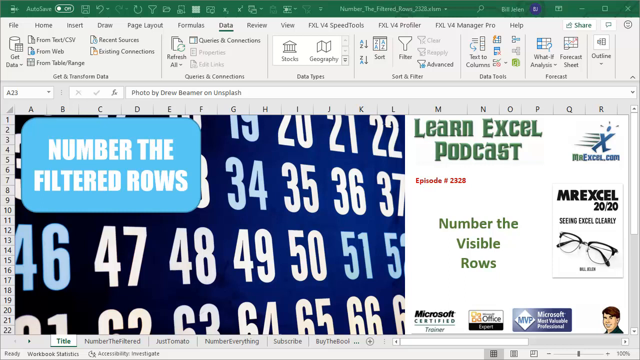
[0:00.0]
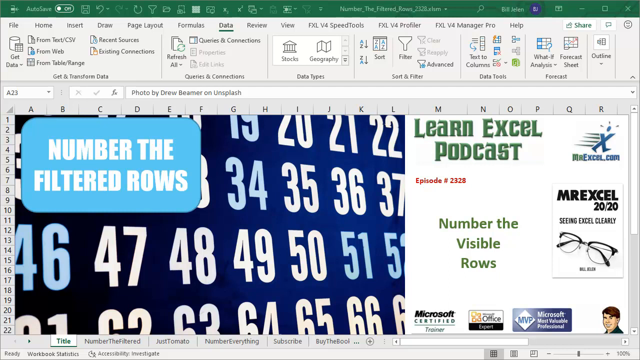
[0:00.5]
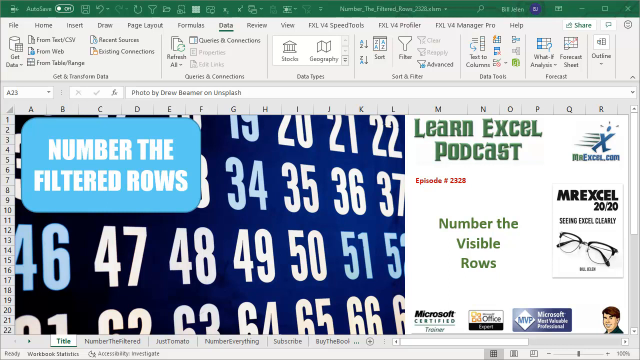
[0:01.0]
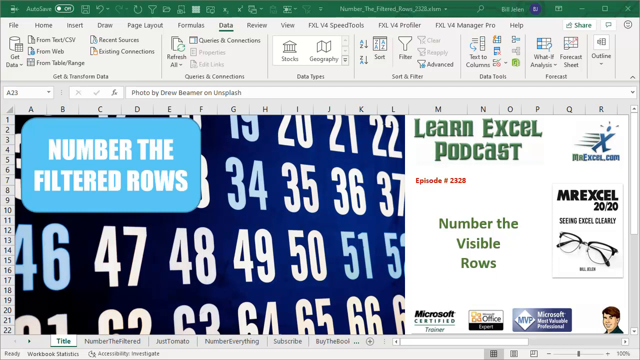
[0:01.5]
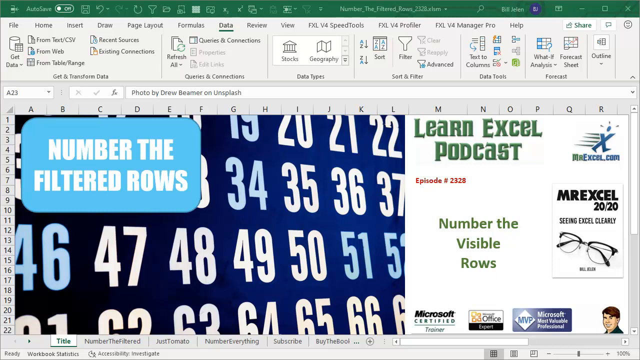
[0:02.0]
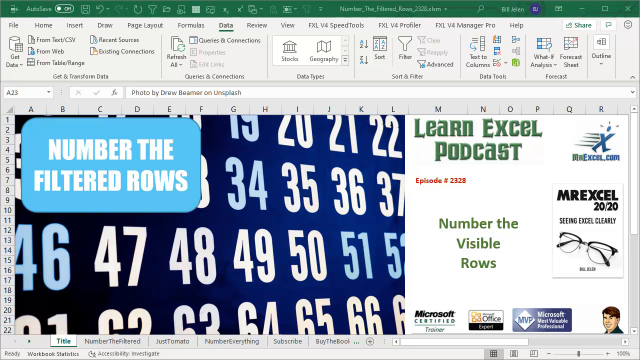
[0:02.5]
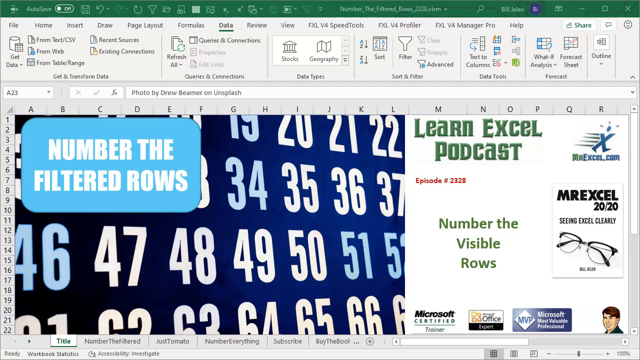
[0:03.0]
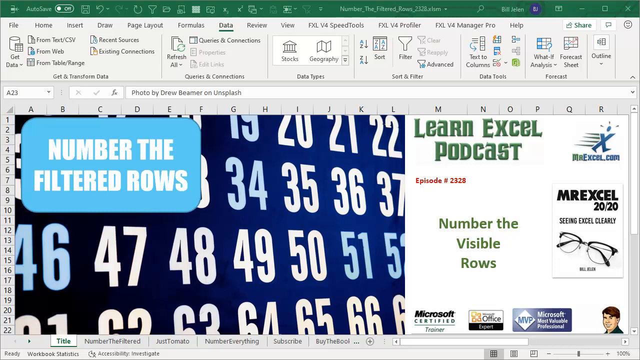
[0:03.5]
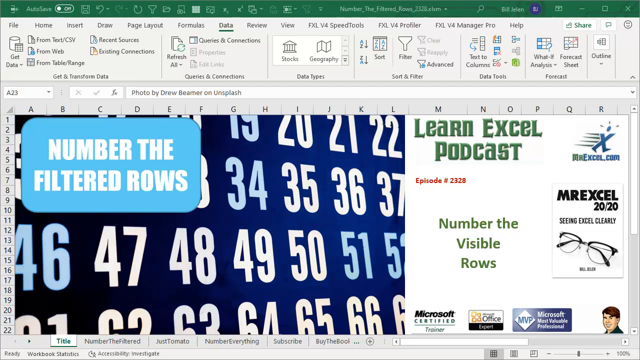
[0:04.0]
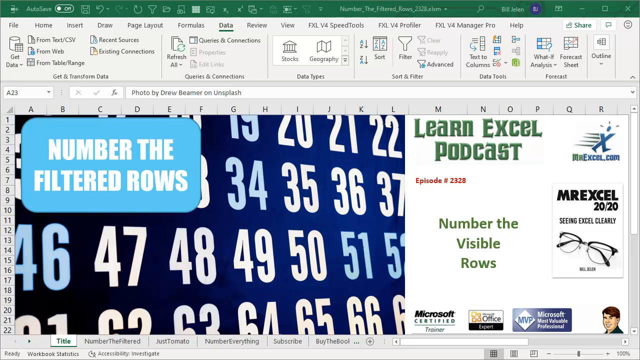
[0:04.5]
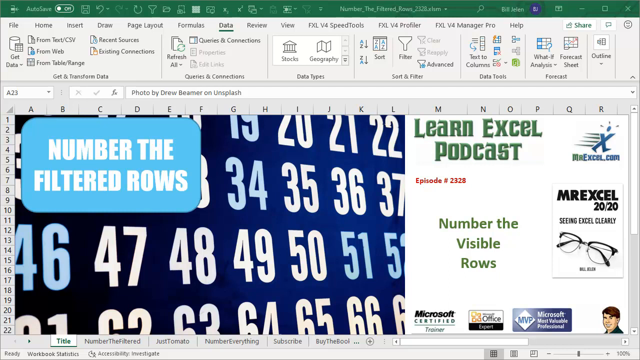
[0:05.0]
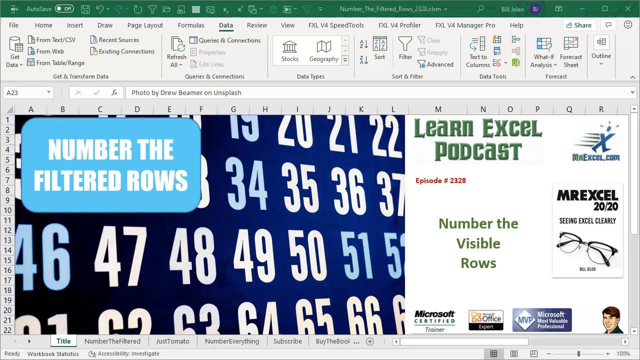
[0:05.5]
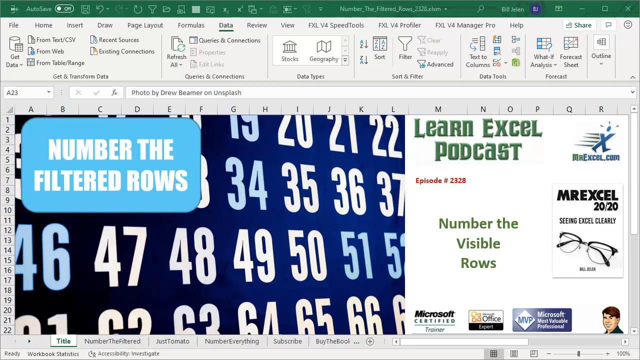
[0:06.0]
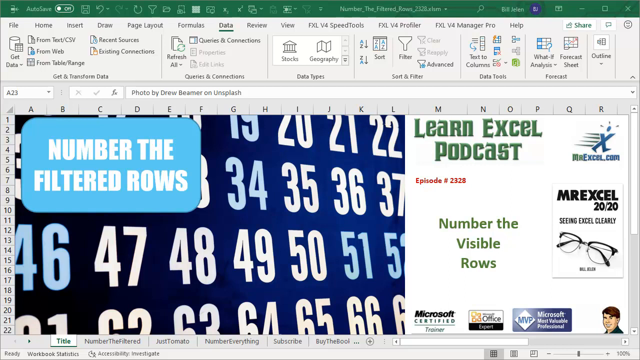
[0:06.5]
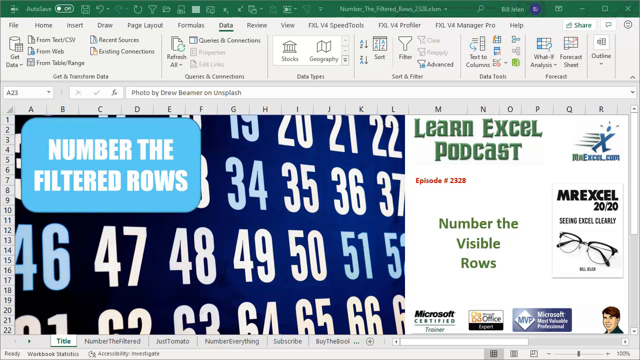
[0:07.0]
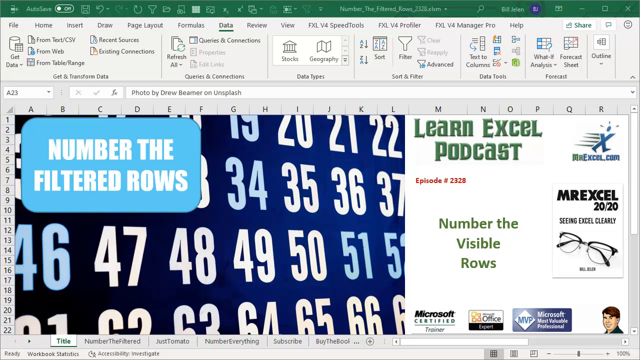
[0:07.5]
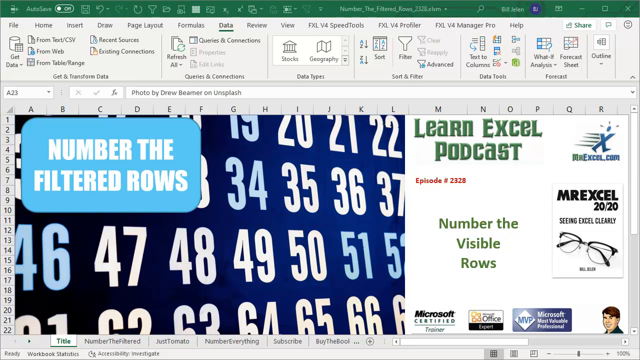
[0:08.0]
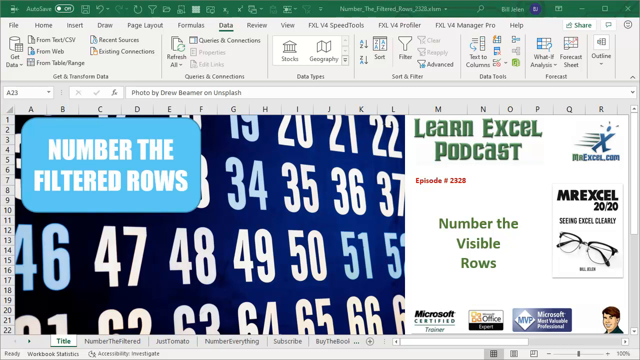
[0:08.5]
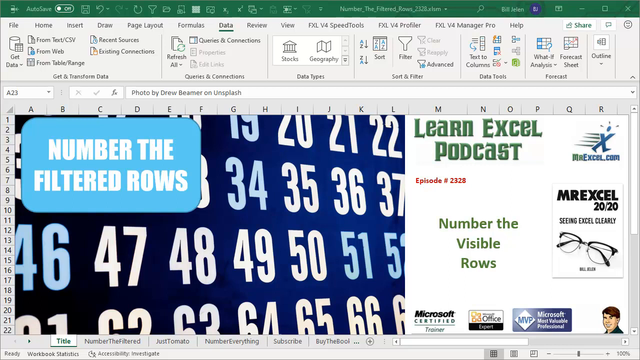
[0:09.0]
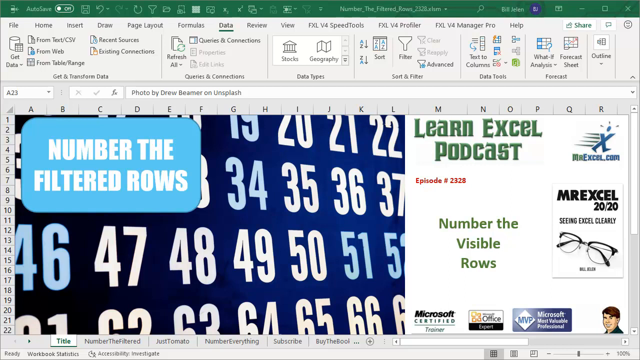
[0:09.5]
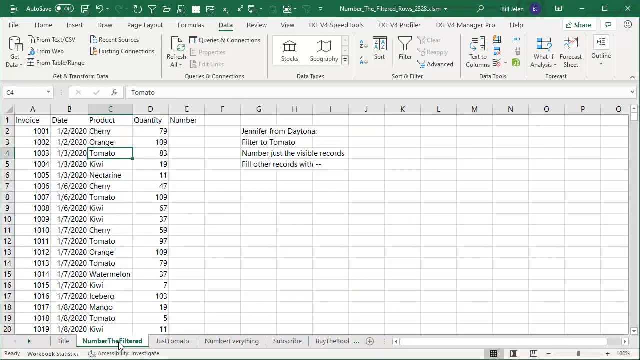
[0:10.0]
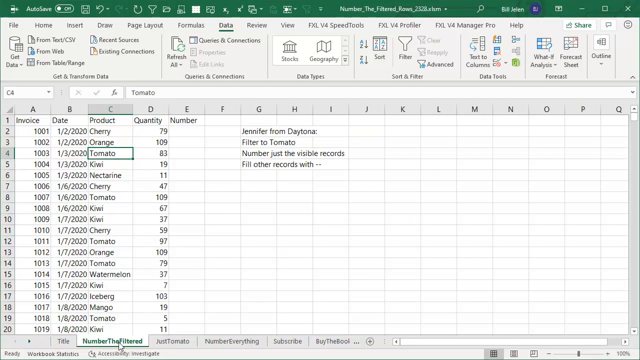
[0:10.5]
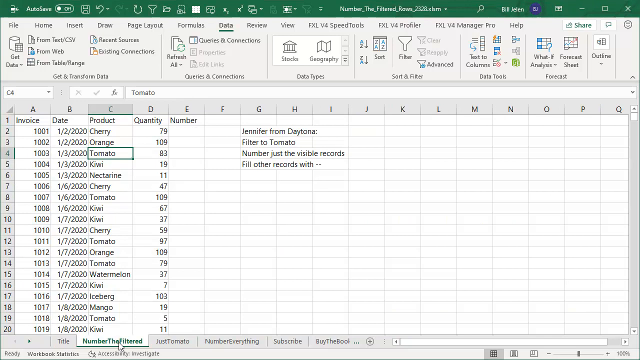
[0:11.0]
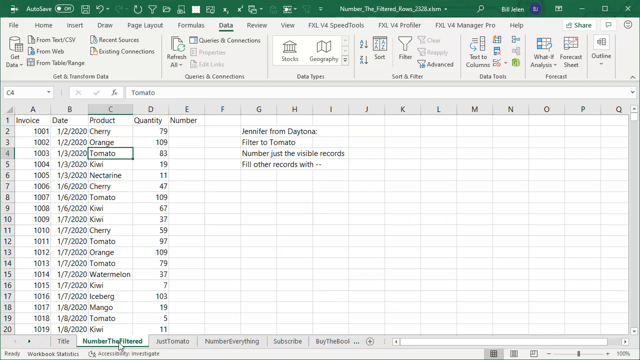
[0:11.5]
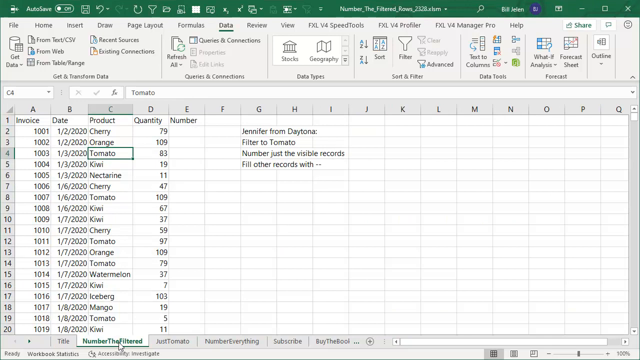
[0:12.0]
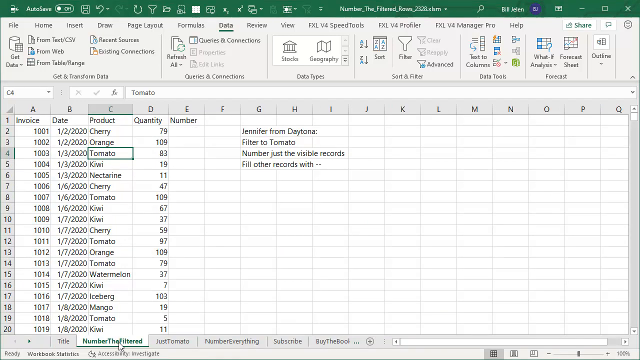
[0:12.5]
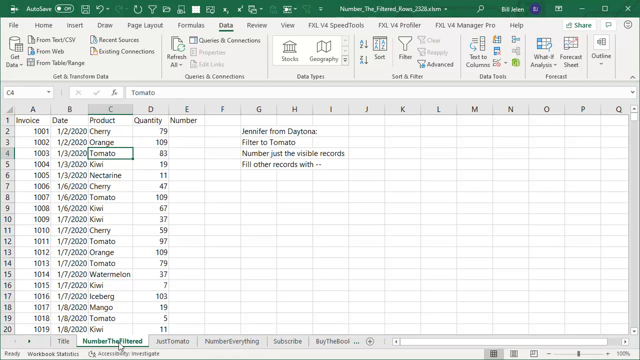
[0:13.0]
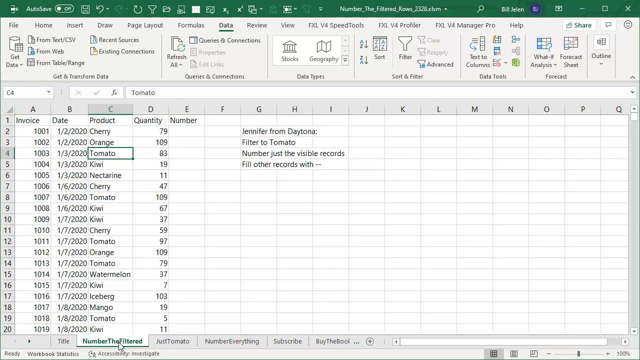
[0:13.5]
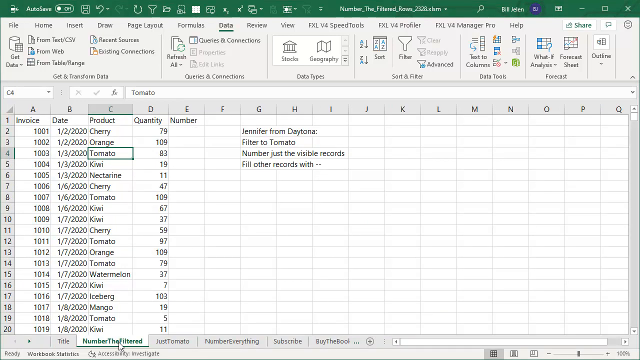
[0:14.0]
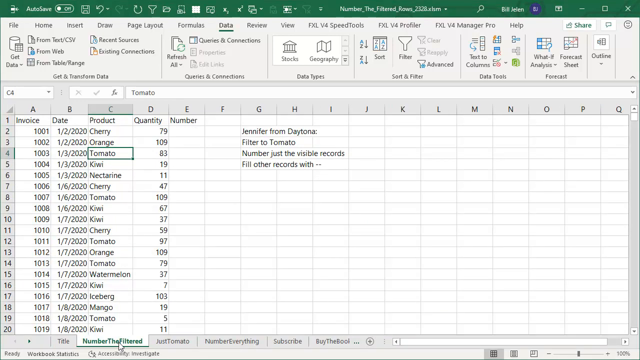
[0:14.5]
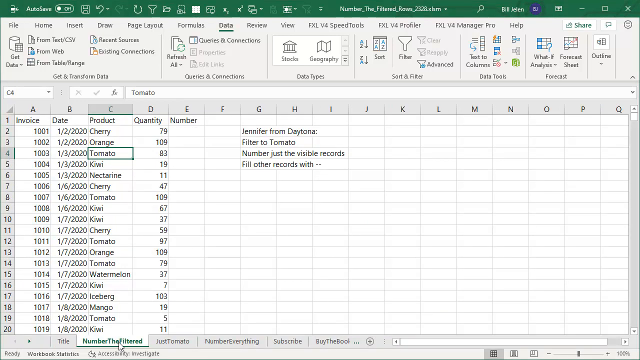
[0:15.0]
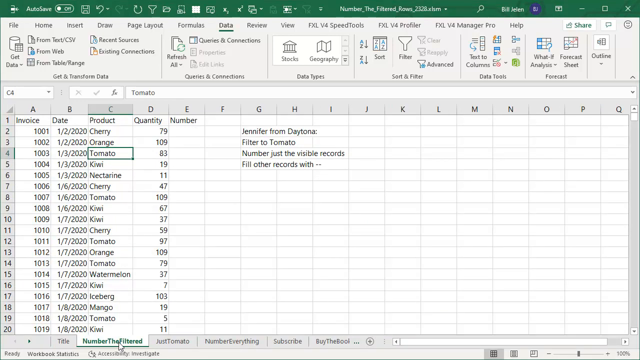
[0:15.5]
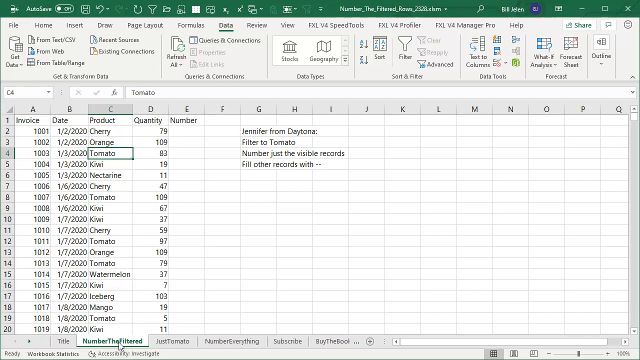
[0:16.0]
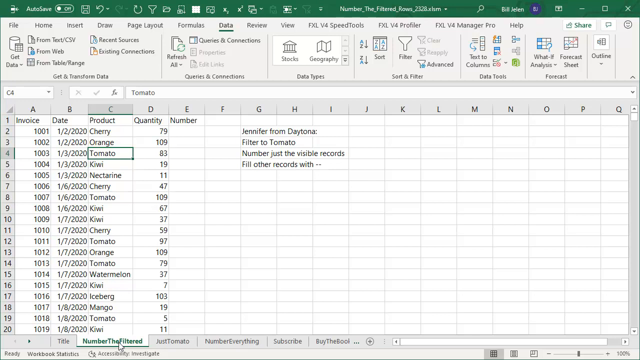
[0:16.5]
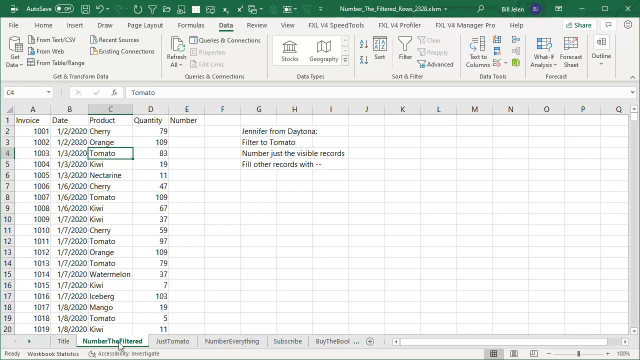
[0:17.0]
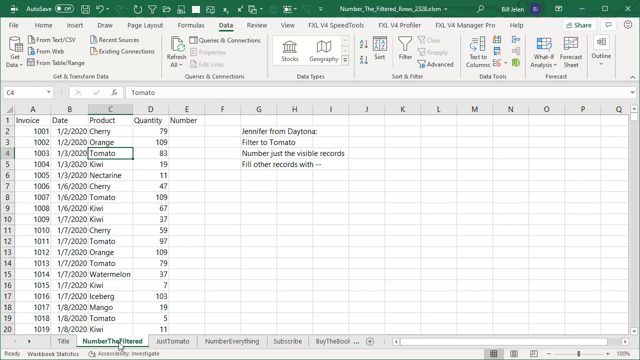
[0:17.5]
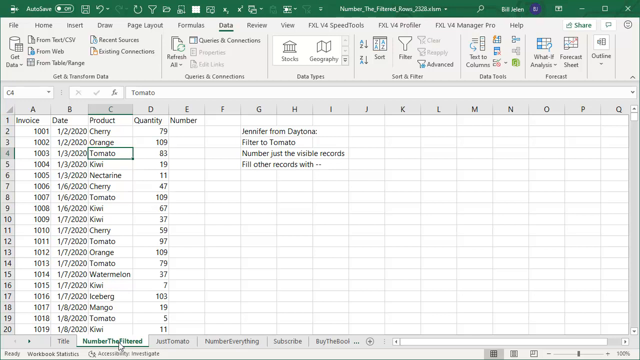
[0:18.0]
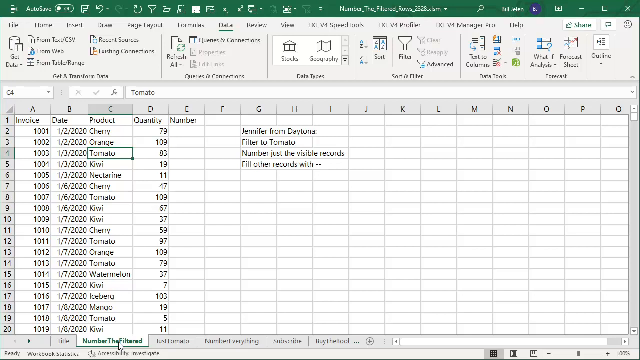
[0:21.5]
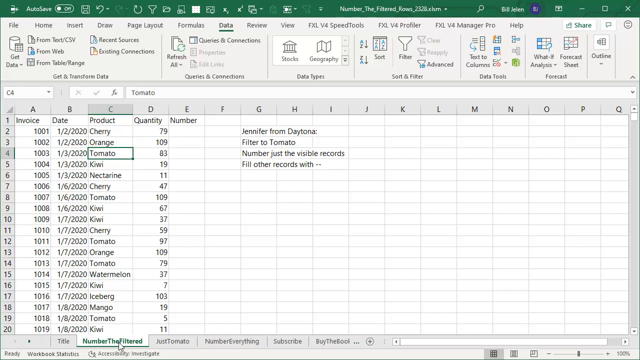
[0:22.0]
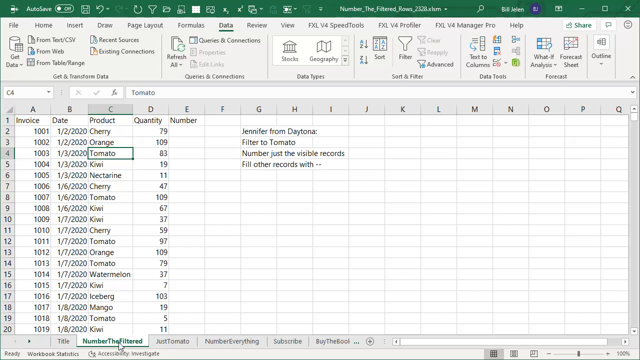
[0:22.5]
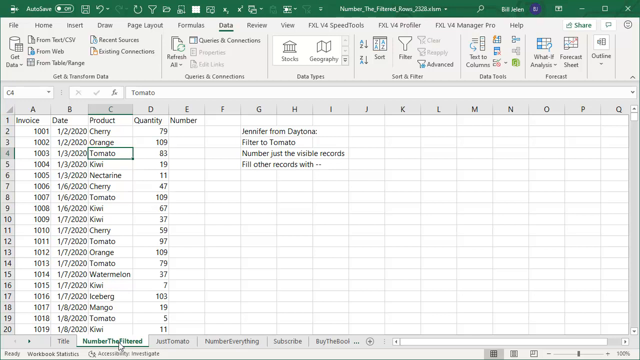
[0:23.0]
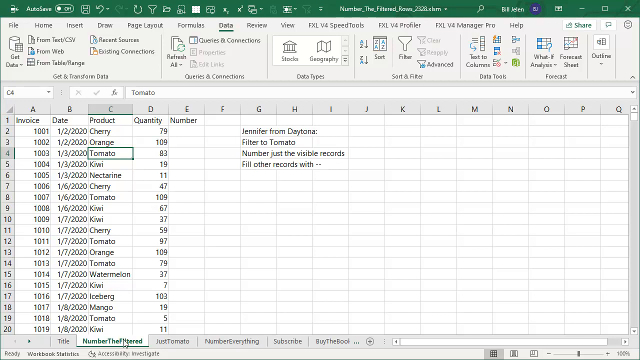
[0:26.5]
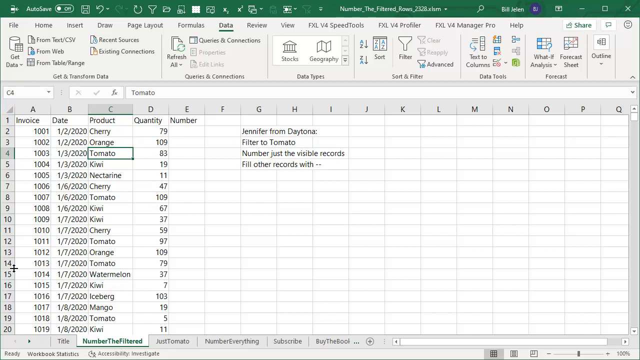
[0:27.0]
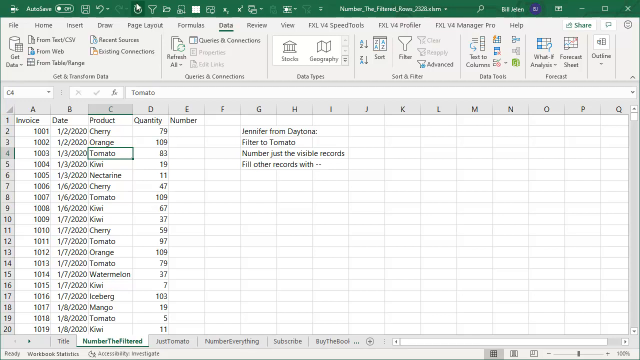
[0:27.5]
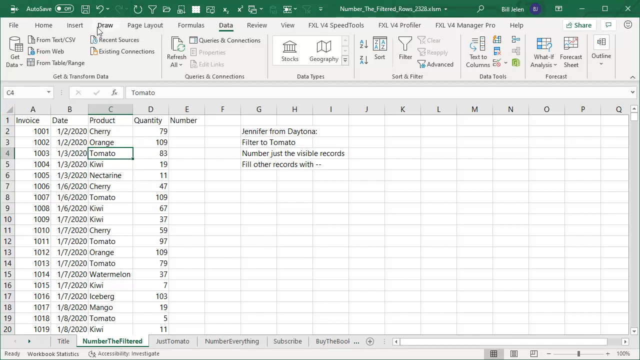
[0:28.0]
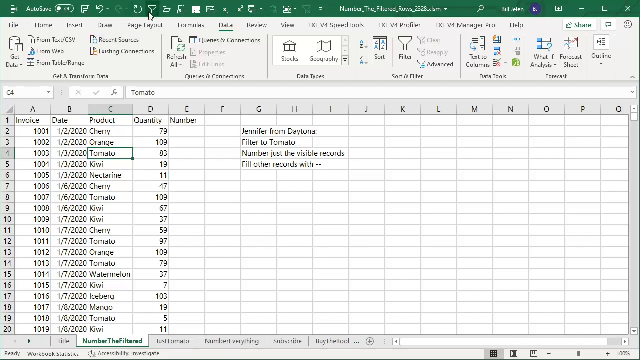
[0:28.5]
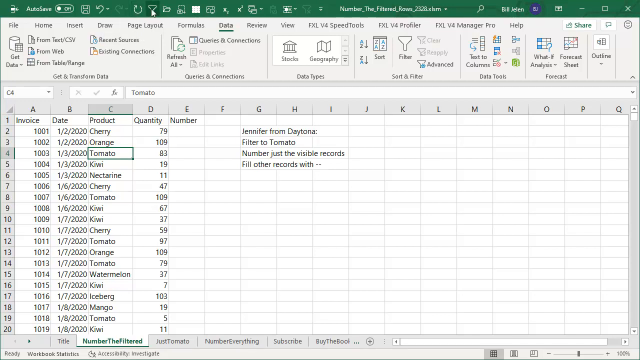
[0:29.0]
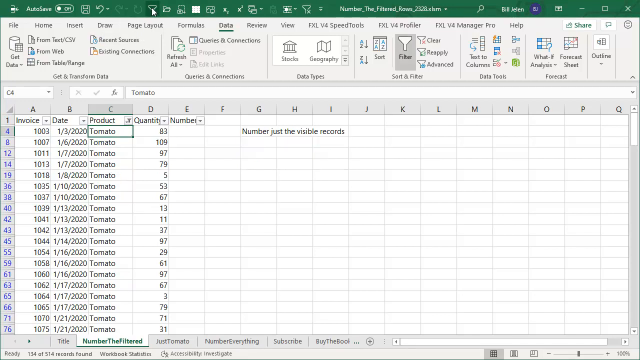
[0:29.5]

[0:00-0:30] The video seems to be related to eyeglass wear and looks like some kind of infomercial, though it is not a website; it shows a spreadsheet with a lot going on. Rows 8 through 11 run down to 22, with a series of numbers, and a light blue box with white writing reads "number the filtered rows." Some of the numbers in a row are blue and some are white; 19 through 22 and 34 to 37 are visible to the right of the filter row box. Further right is the text "learn Excel podcast," along with different text and an Excel.com logo. Suddenly the view switches to another spreadsheet with column headers reading invoice, date, product, quantity and number. Invoices run from 1001 through 1019, with dates, products including kiwis, cherries and tomatoes, quantities, and a blank number column, plus notes in a few of the cells. The cursor goes up to the filter button, and when it is clicked the numbers on the left turn blue.